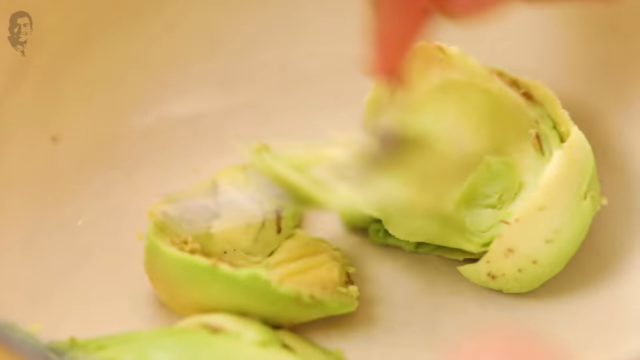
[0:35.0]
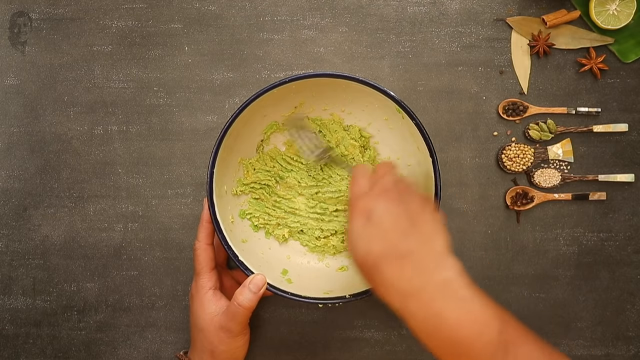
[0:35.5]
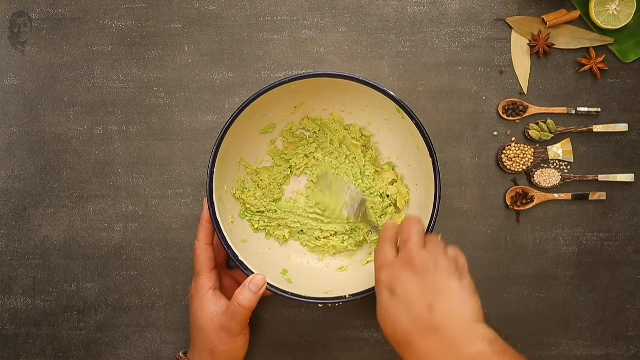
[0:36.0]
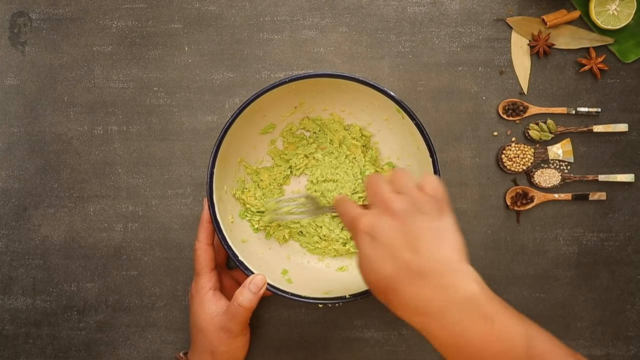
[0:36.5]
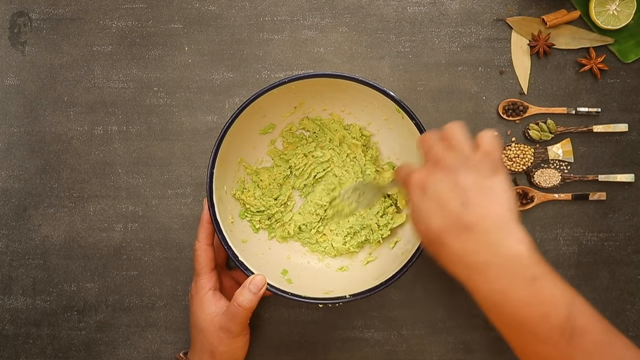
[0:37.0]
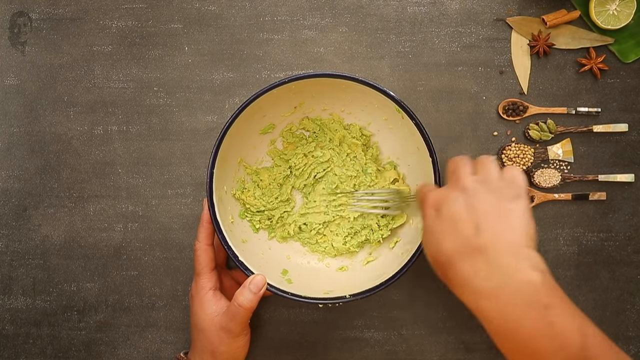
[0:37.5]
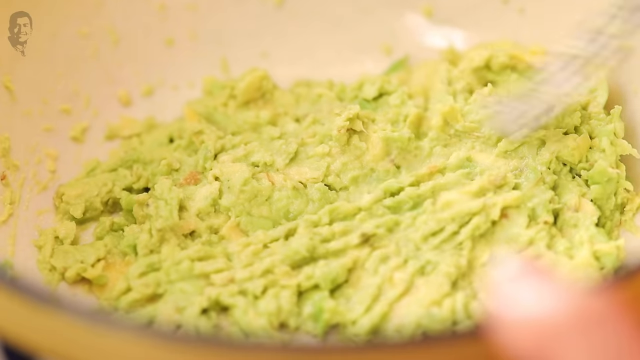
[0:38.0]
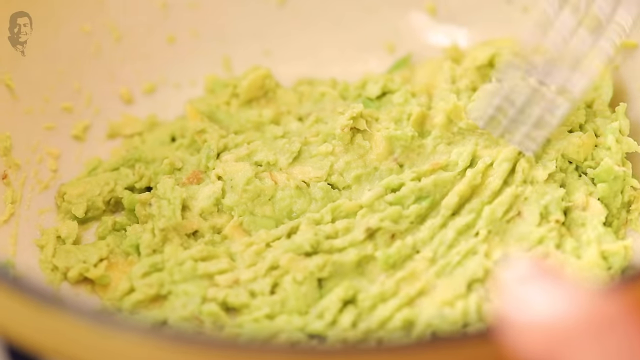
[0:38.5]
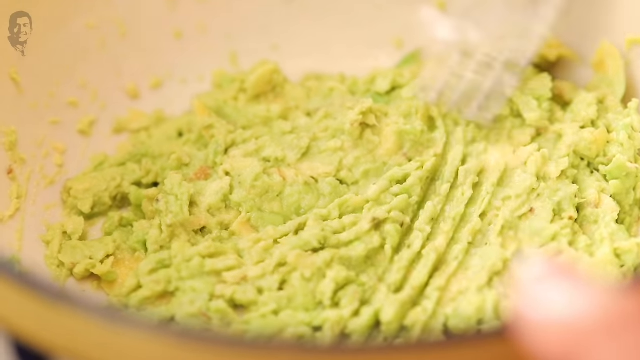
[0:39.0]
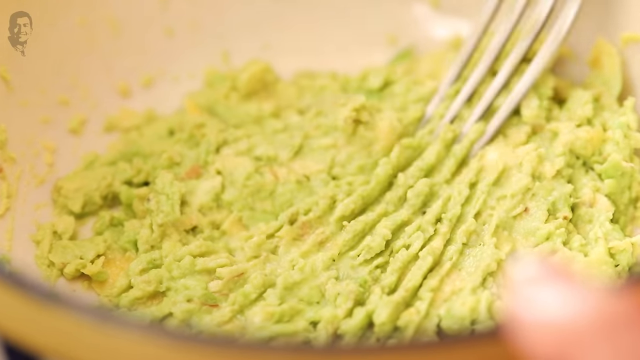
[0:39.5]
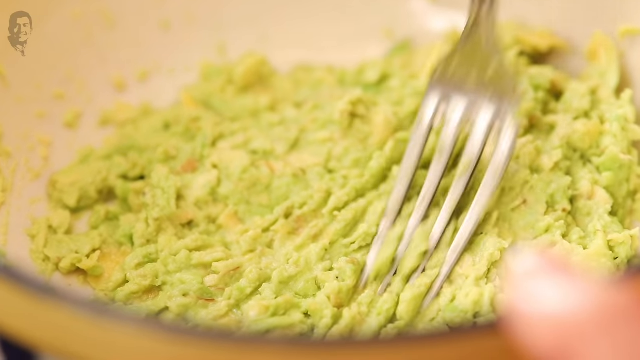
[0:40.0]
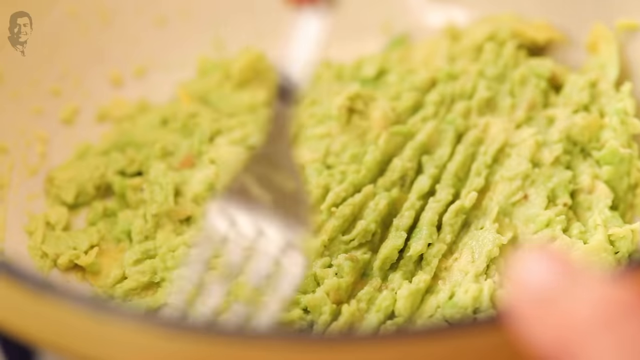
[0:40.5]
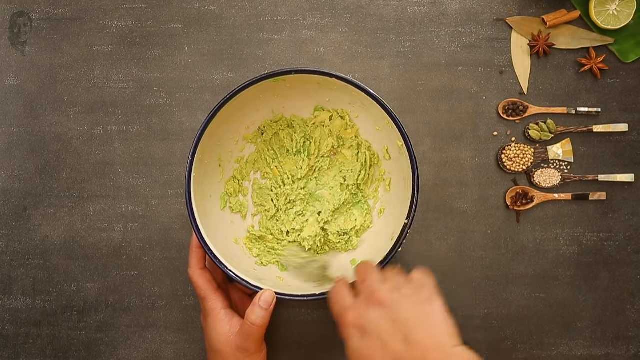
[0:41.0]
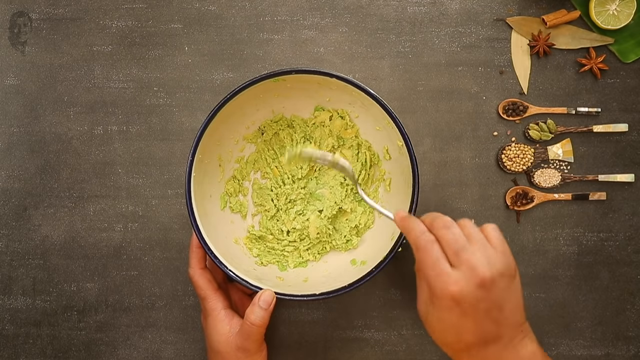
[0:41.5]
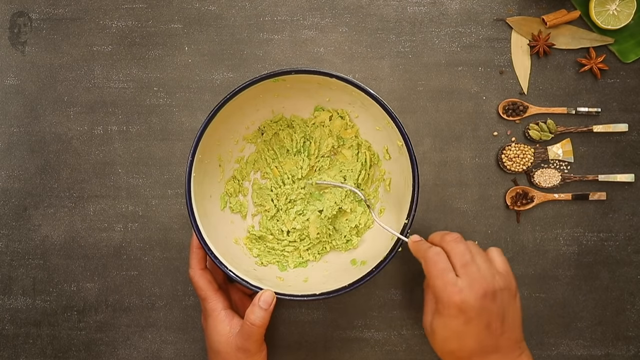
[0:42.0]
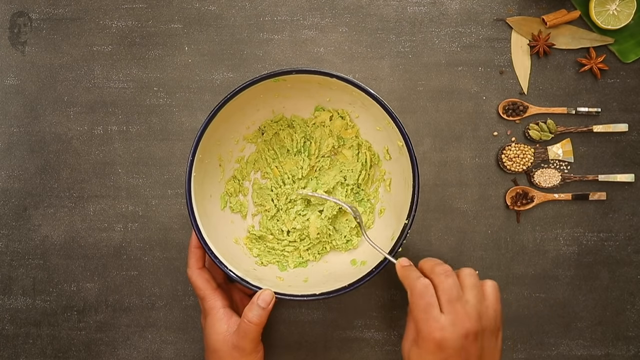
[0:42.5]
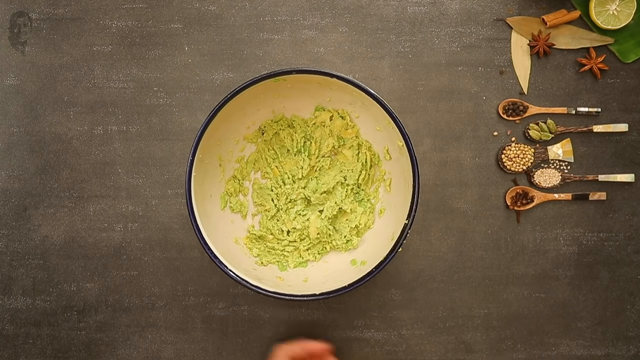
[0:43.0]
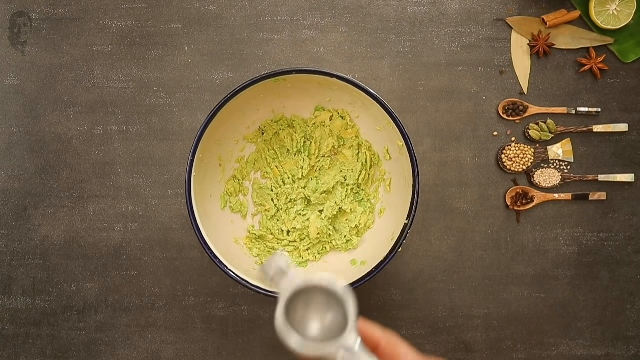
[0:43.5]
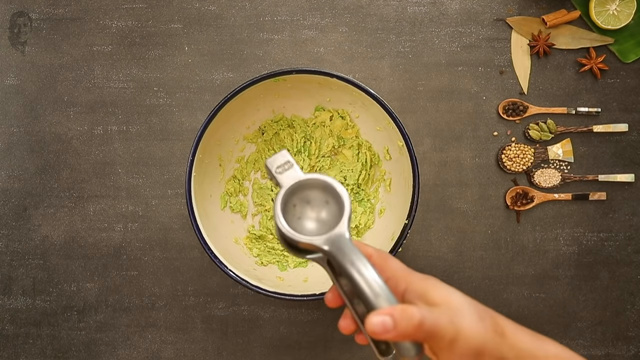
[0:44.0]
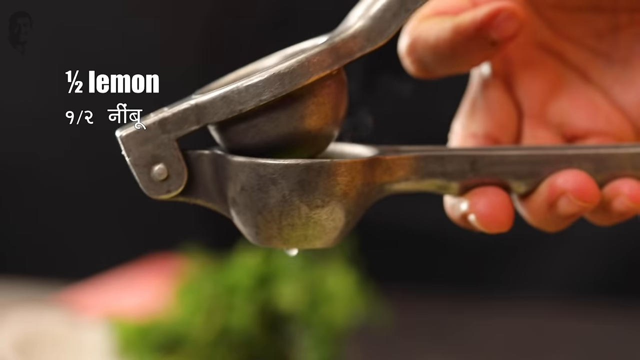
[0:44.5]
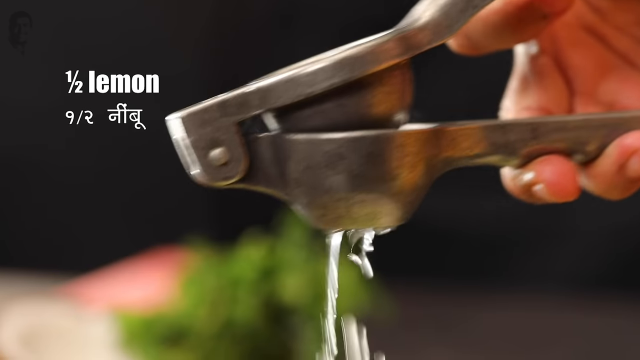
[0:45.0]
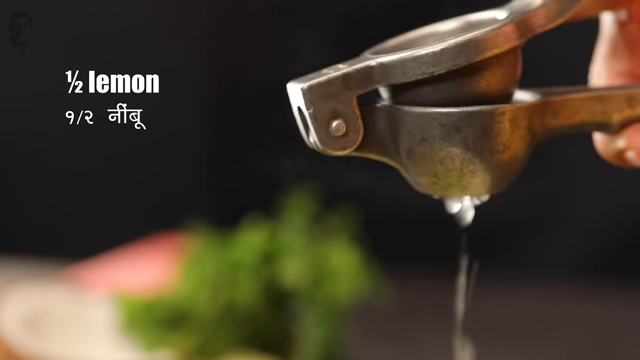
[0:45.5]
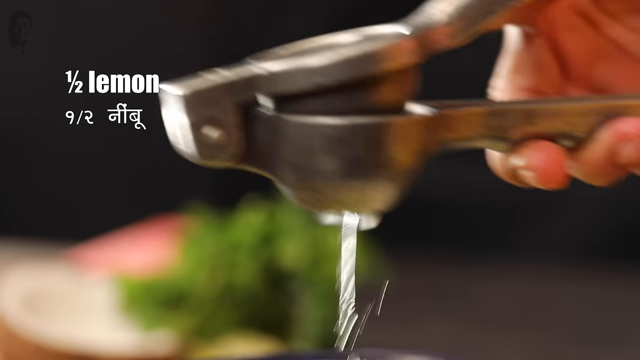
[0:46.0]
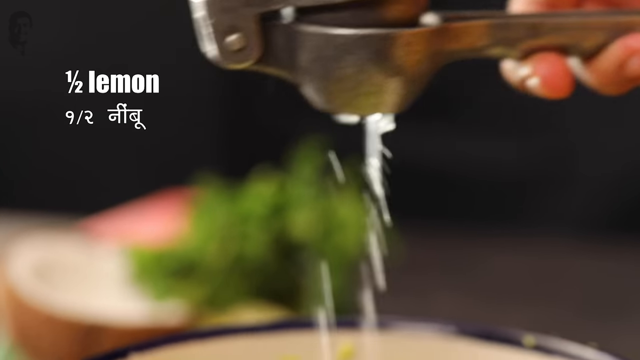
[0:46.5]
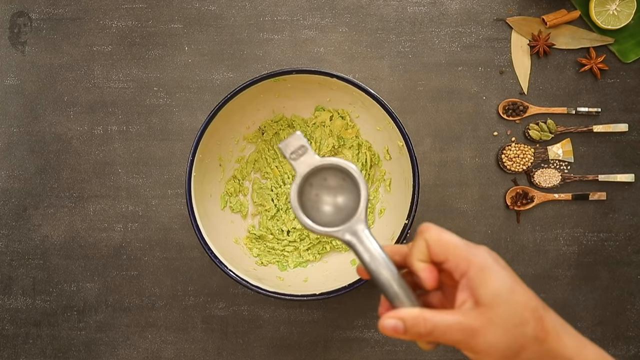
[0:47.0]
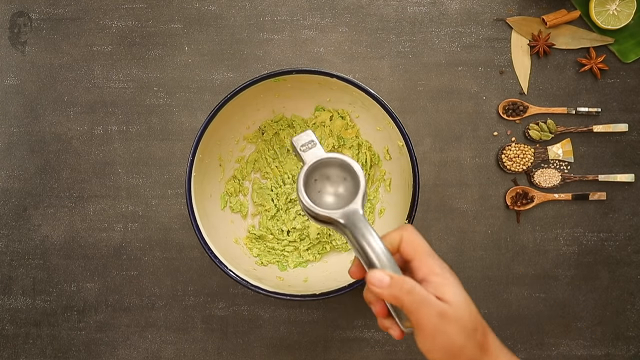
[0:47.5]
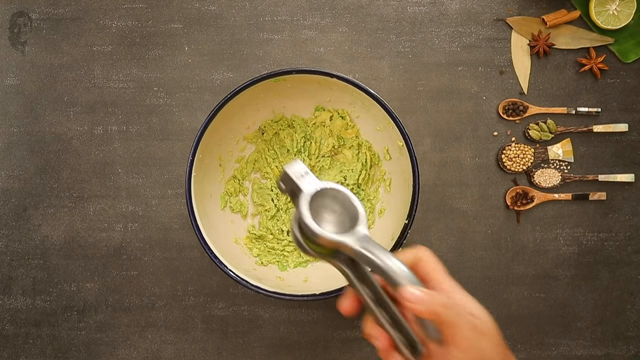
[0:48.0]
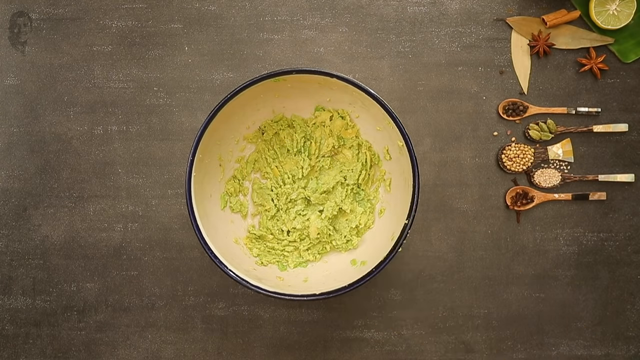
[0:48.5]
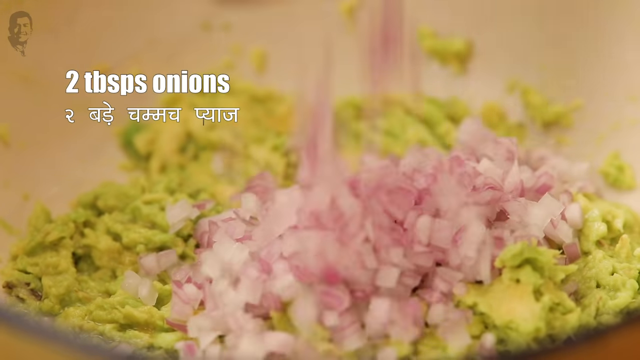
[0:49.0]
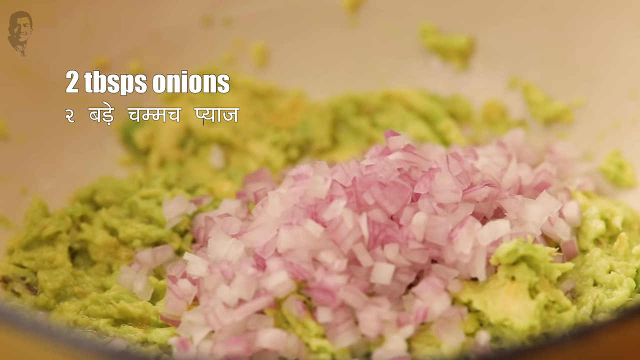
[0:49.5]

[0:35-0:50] In the white bowl with the blue rim, the avocado has been squished down until it is practically flat, like a paste, and the woman draws lines through it with a fork to make sure it is smooth. She has what she appears to be a lime in a lime or lemon squeezer and squeezes a good amount of juice onto the avocado in the bowl. Next she adds finely cut purple onions to the avocado mix. After that, she looks like she is getting ready to put cut-up red peppers on top. The other herbs wait on the side.